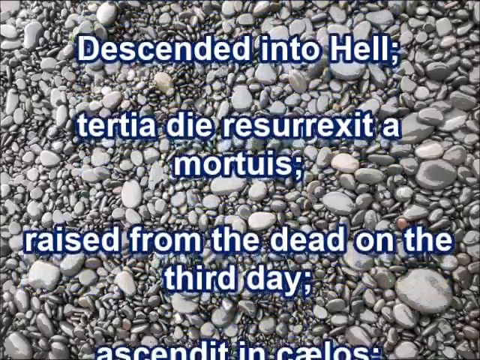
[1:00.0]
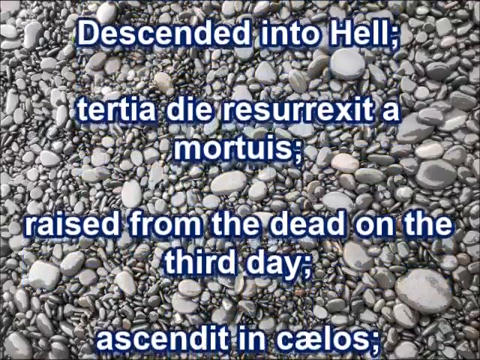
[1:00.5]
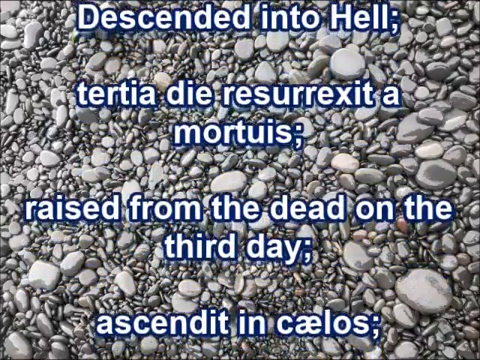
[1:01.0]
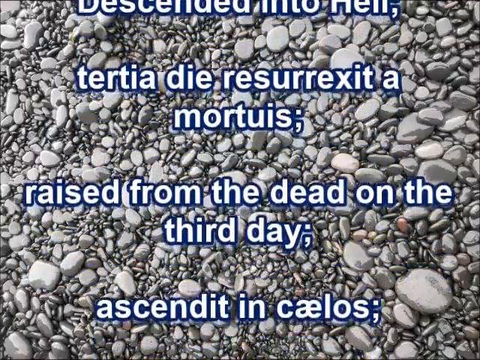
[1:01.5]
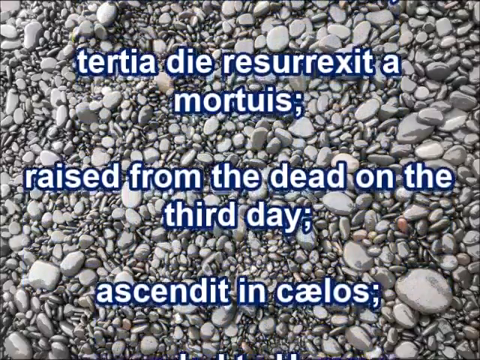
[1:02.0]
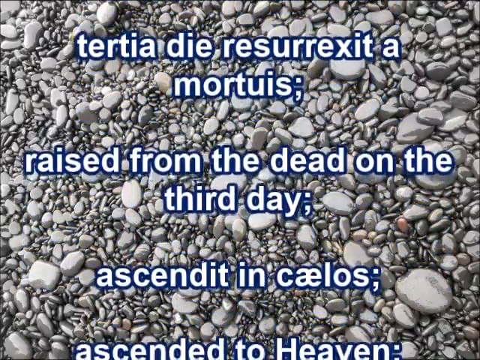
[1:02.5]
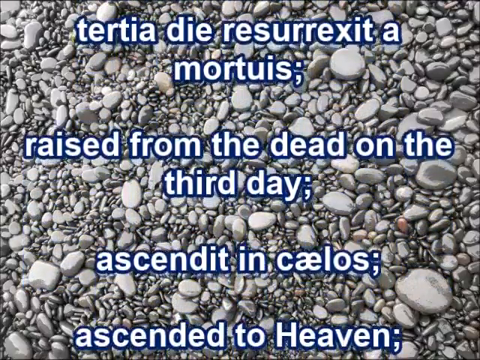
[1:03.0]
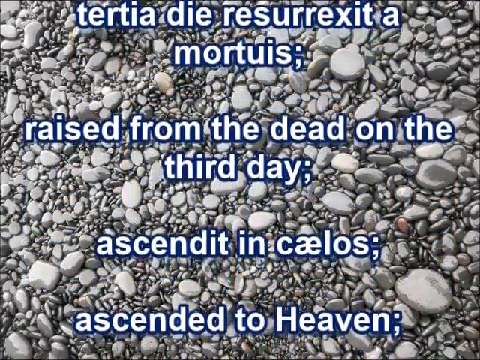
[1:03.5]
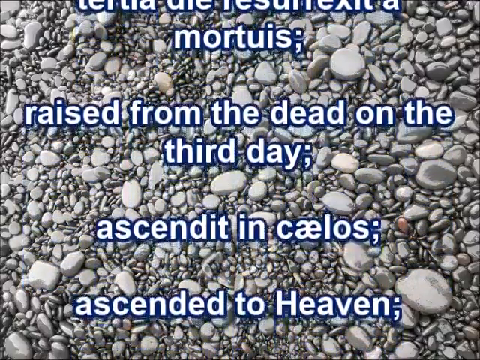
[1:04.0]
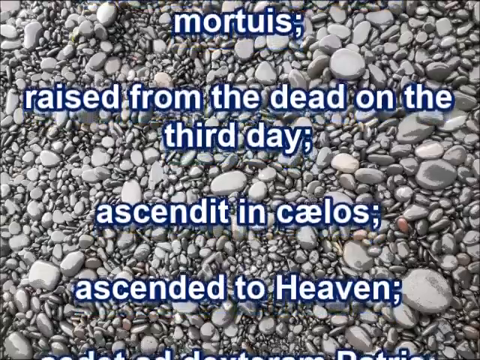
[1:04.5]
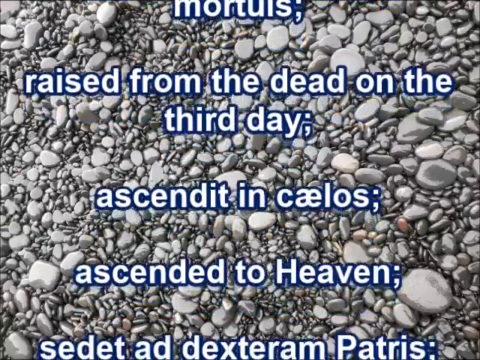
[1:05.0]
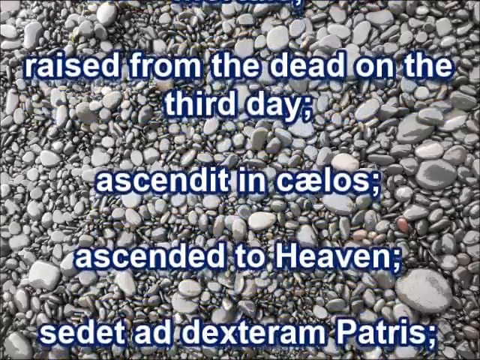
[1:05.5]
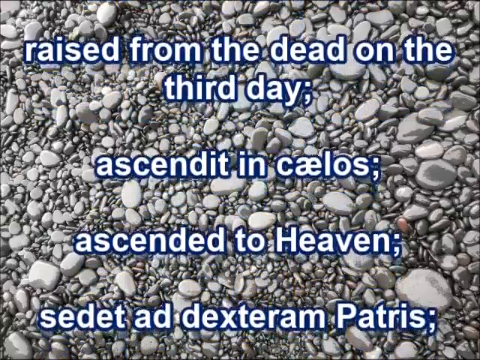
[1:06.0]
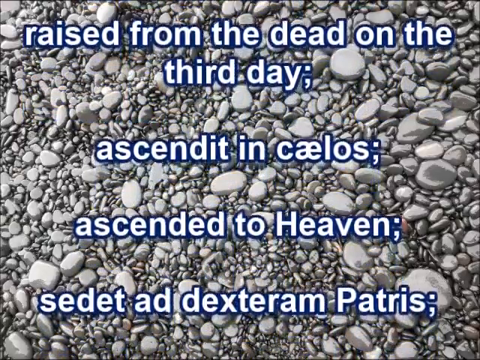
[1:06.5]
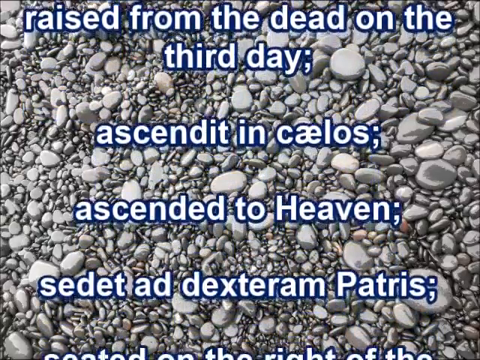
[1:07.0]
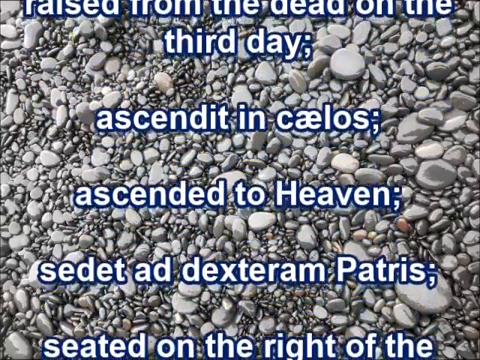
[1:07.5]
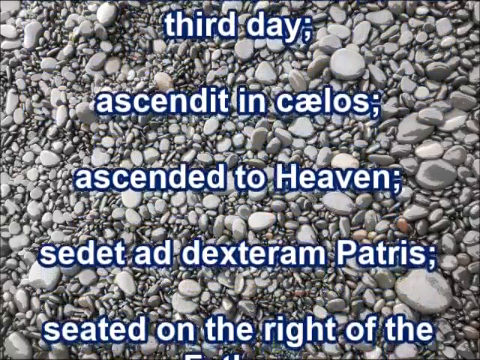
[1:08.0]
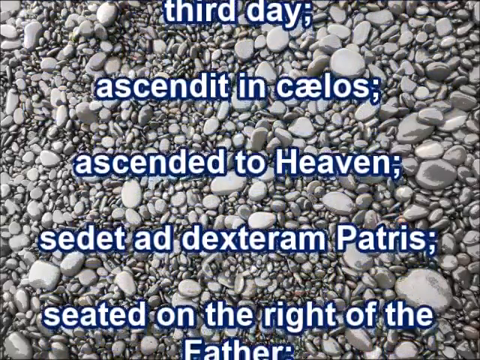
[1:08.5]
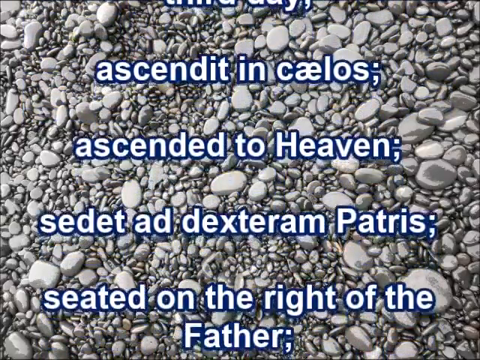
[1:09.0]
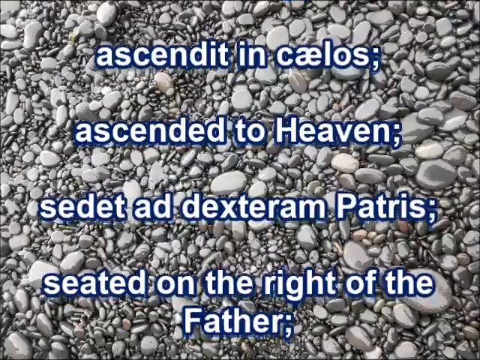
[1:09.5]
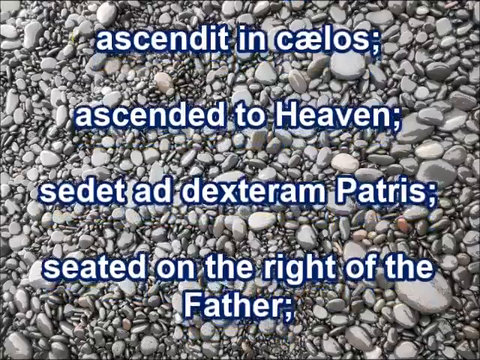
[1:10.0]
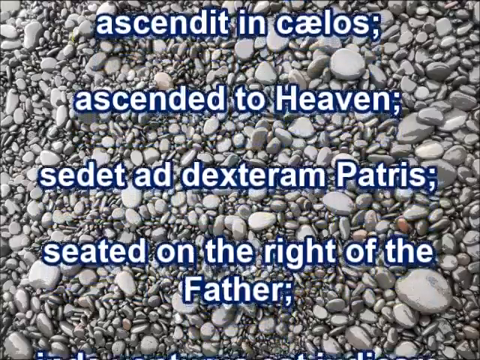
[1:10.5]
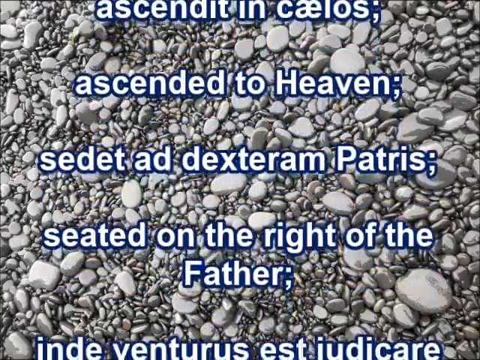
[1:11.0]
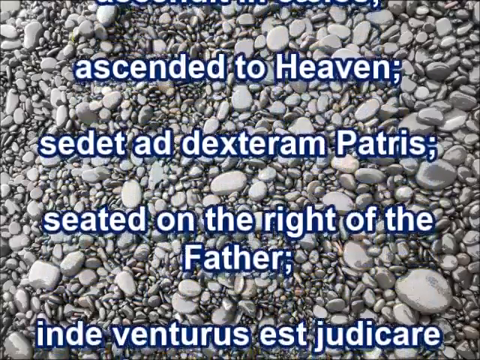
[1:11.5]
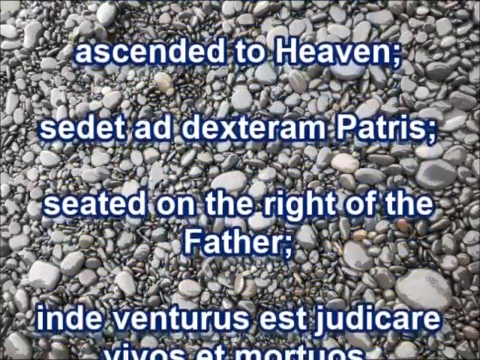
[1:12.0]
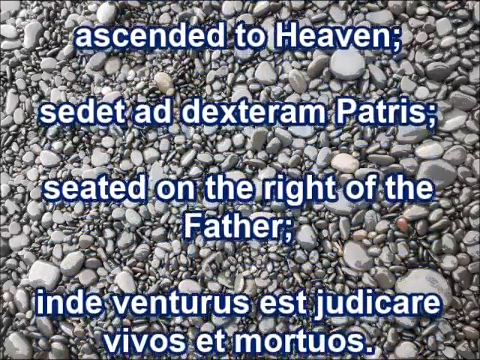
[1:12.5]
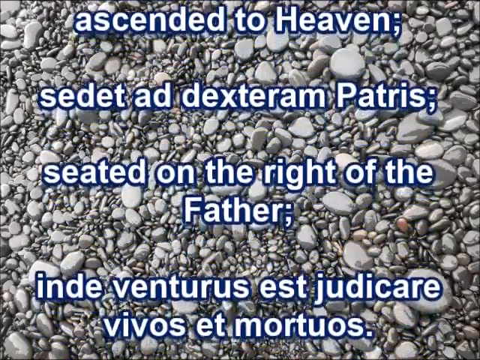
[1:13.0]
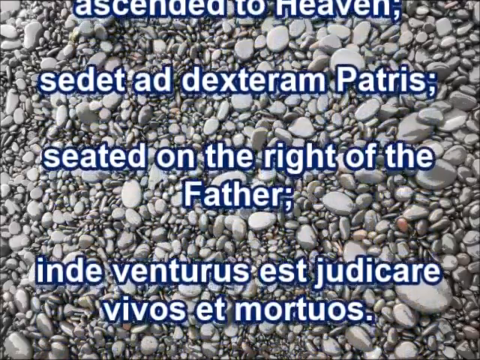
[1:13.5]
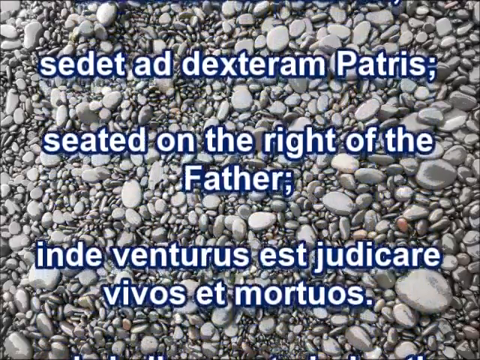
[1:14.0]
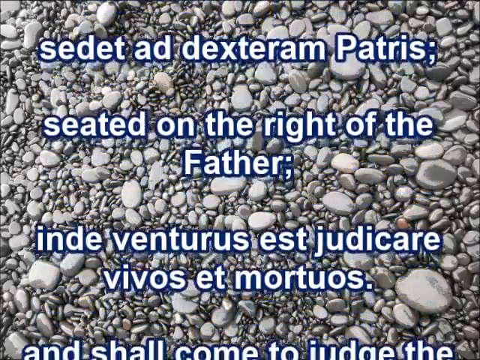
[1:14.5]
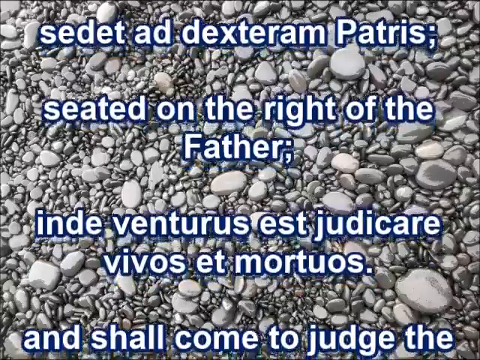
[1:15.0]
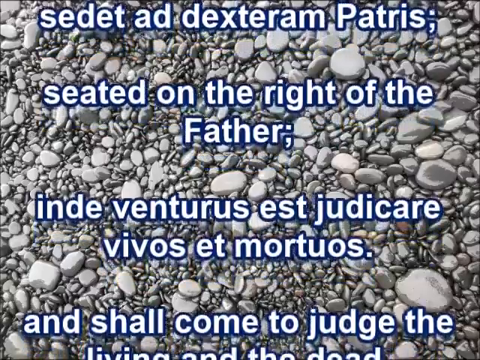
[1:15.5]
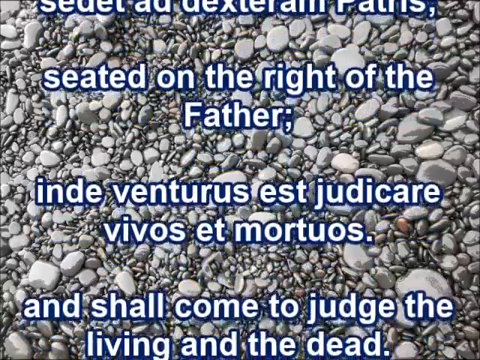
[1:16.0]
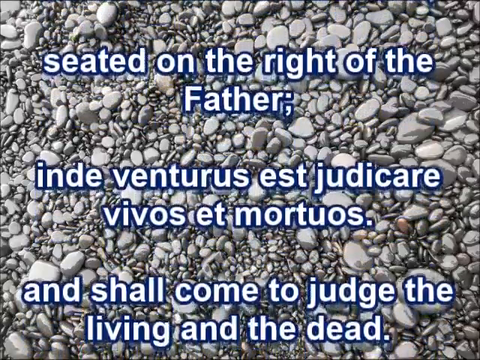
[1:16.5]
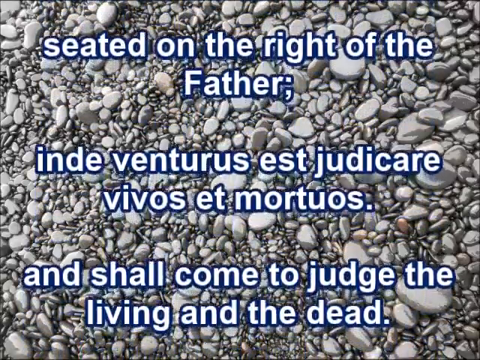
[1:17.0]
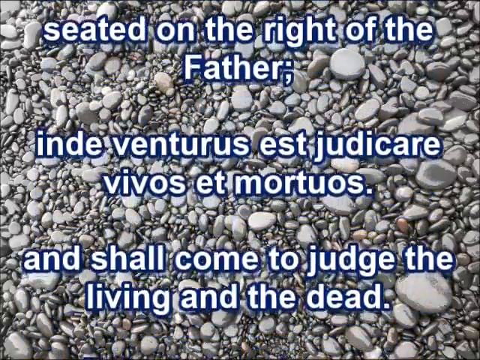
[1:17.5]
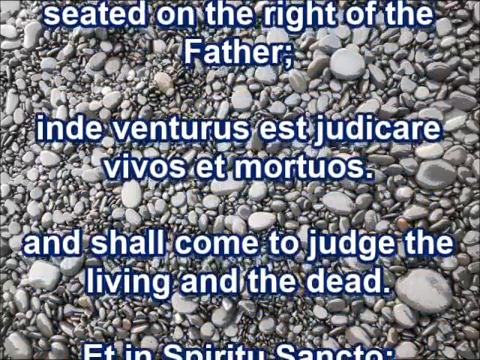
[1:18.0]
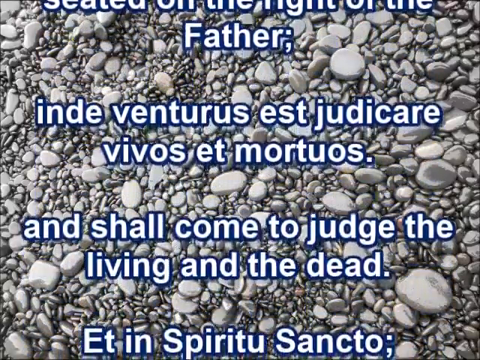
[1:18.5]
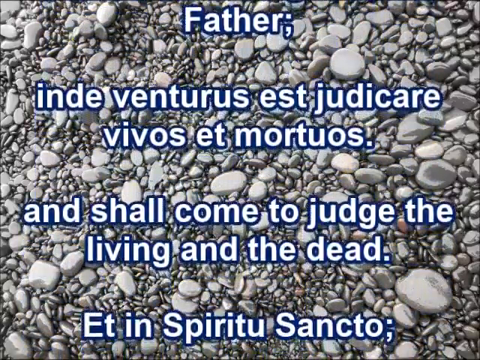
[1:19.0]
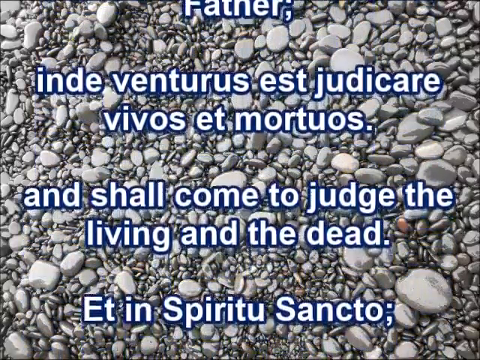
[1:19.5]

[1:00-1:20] The camera faces the ground, which is covered with many differently shaped and sized rocks, from small pebbles to larger stones. Some are white and light gray, and others are dark gray. In the center of the screen, Spanish words are interspersed with English words, all written in white with a dark blue border. The English text first reads "Raised from the dead on the third day", then "Ascended to heaven", then "Seated on the right of the father" and "And shall come to judge the living and the dead", each interspersed with Spanish translations.